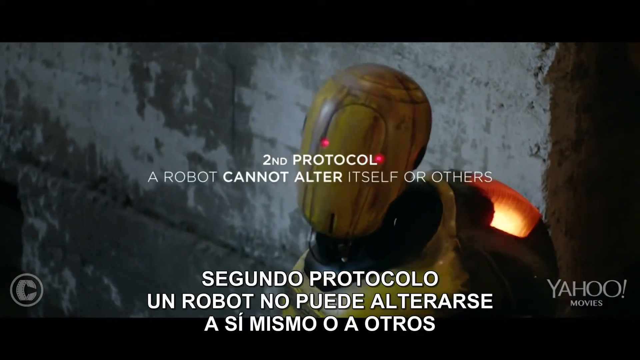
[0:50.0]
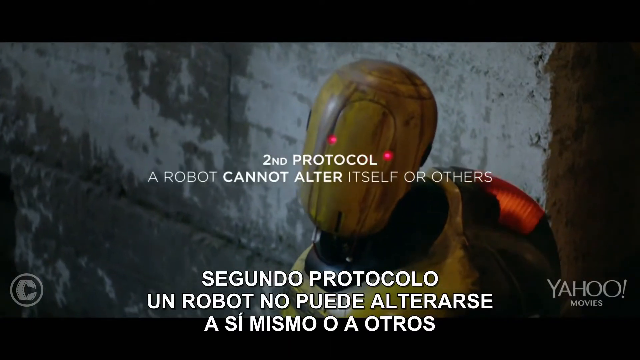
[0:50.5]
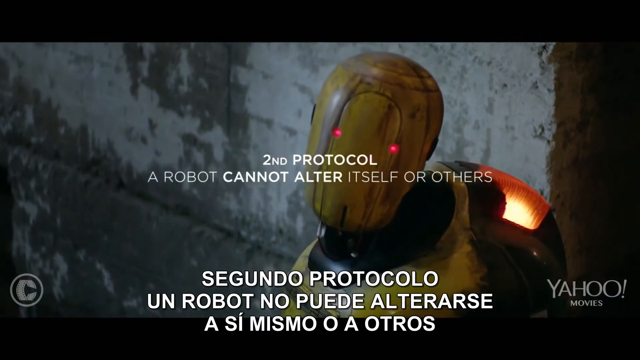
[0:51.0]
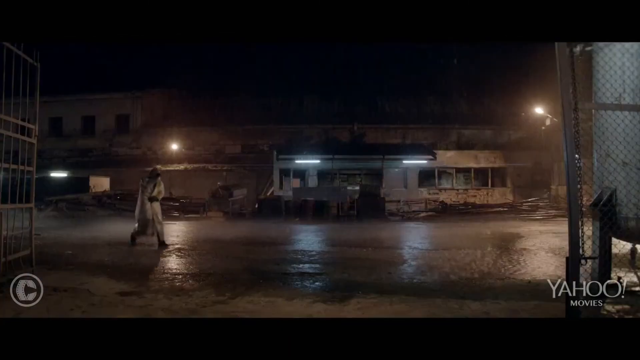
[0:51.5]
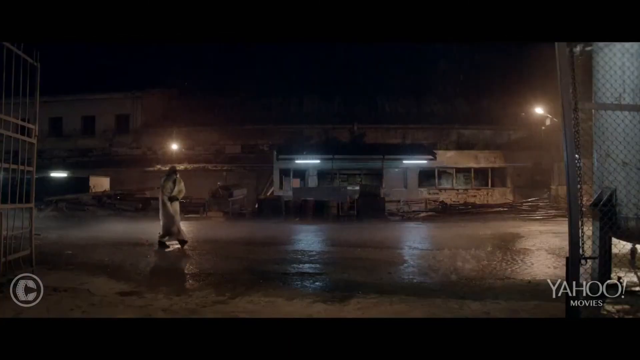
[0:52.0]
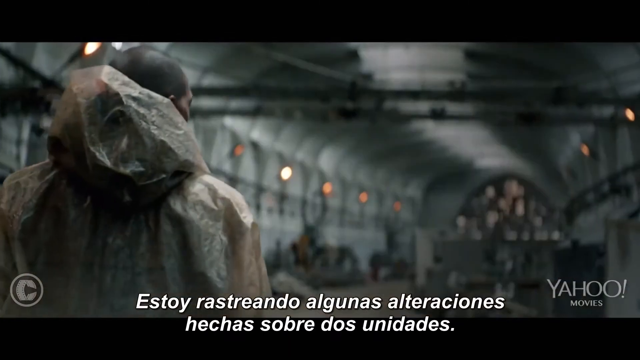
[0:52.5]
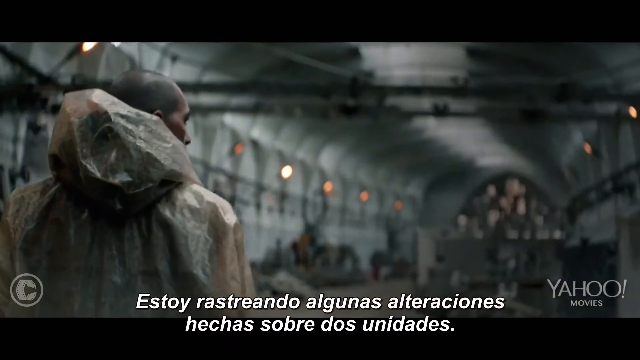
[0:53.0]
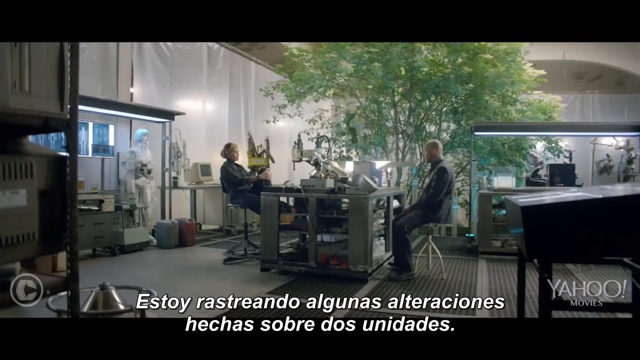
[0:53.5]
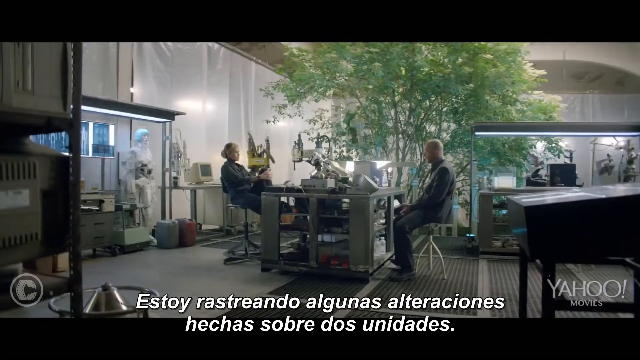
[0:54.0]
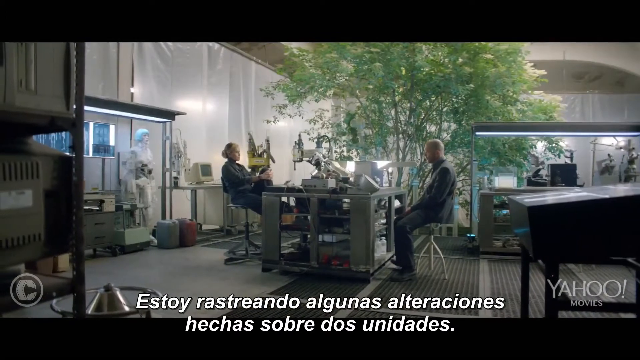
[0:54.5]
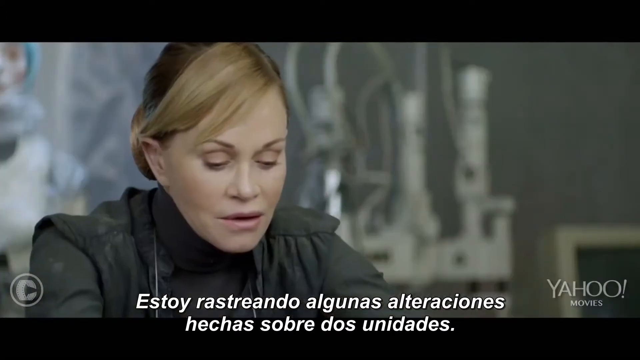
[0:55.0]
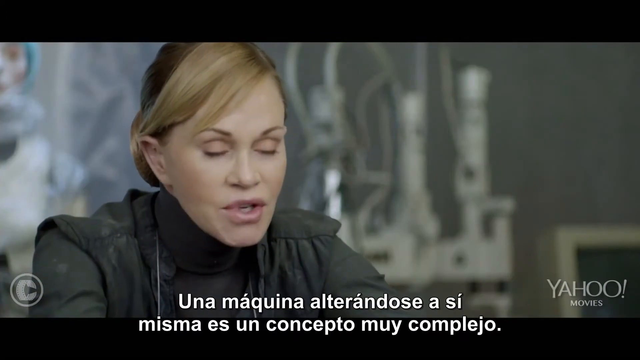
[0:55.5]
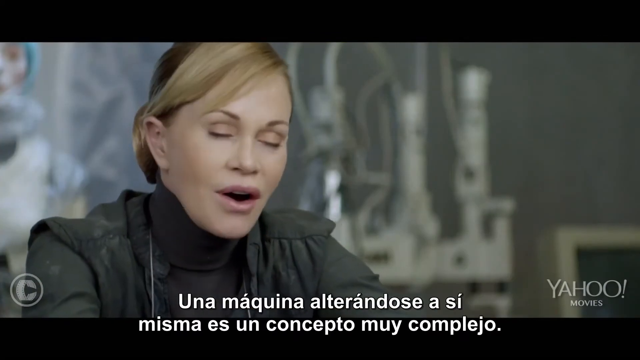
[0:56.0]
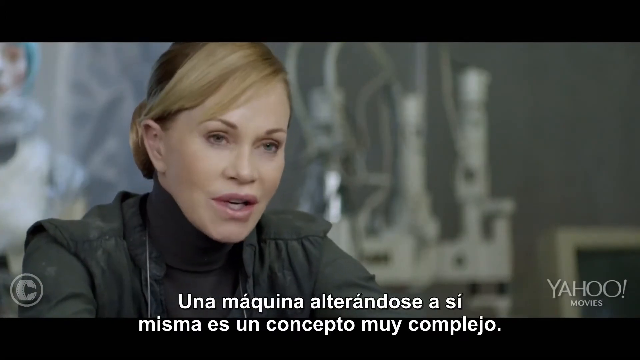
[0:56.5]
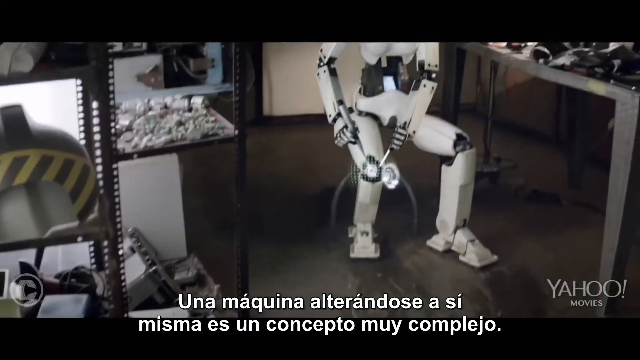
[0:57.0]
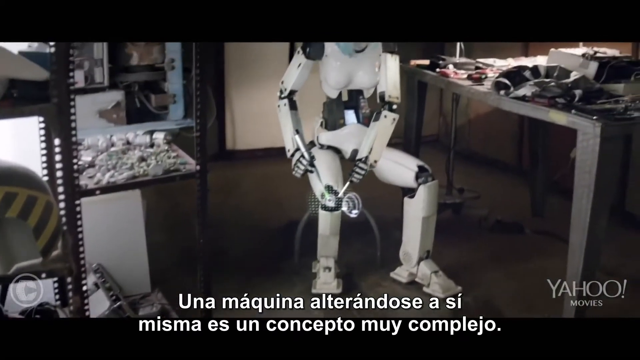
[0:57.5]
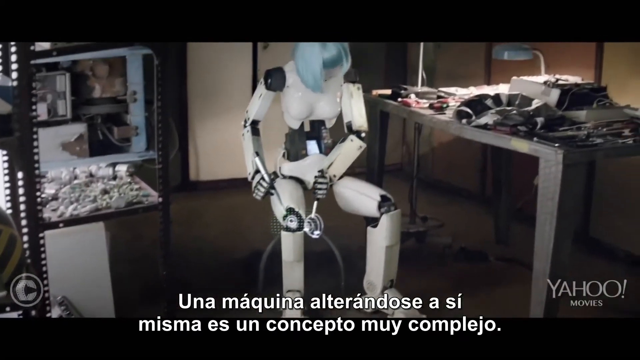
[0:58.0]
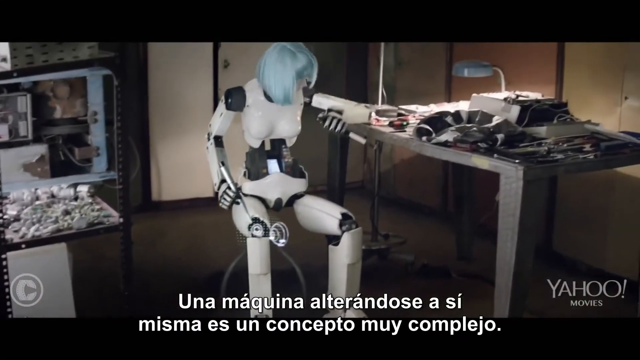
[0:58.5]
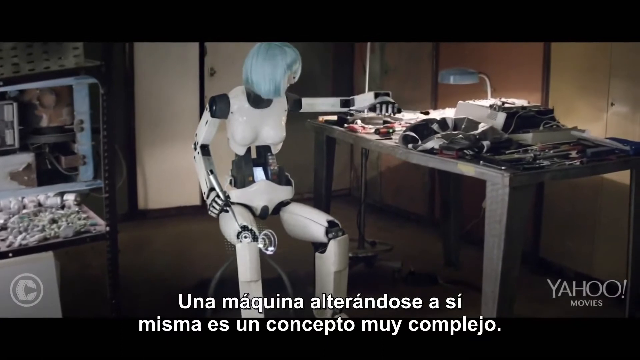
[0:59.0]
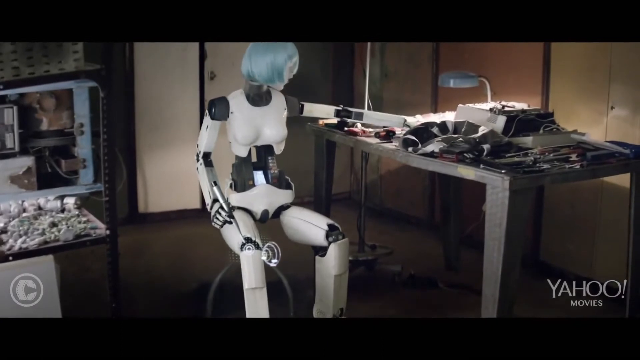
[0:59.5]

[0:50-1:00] The second rule appears: "a robot cannot alter itself or others." Scenes follow of people walking around in the rain. Next is what looks like a greenhouse, where the main protagonist talks to another woman, apparently middle-aged, who has robots of her own and is doing work on them. One robot, which has a blue wig, is in repair mode working on its own kneecaps. A very big green tree grows in the middle of the greenhouse's first floor, and the building looks two stories tall. The scene is set in 2044.